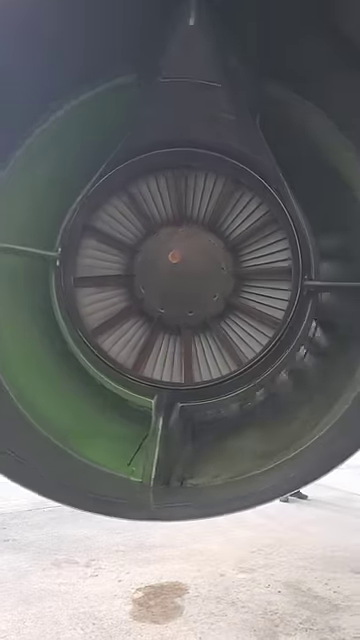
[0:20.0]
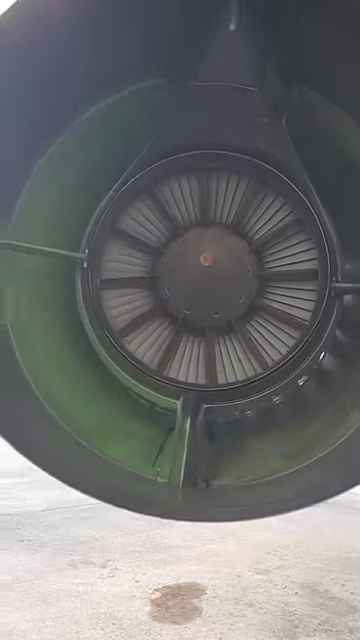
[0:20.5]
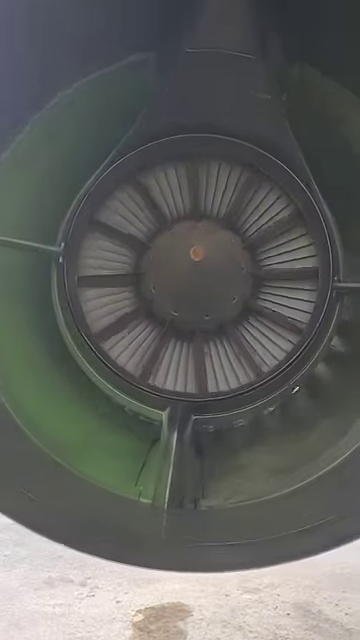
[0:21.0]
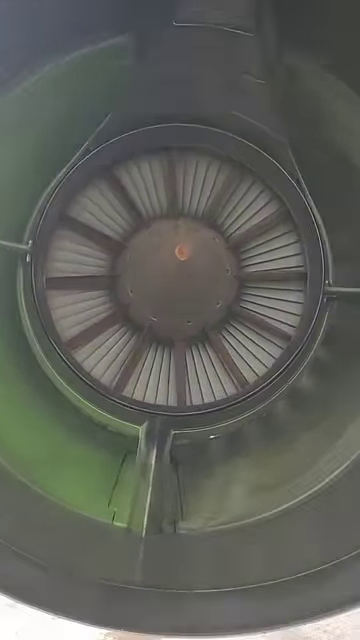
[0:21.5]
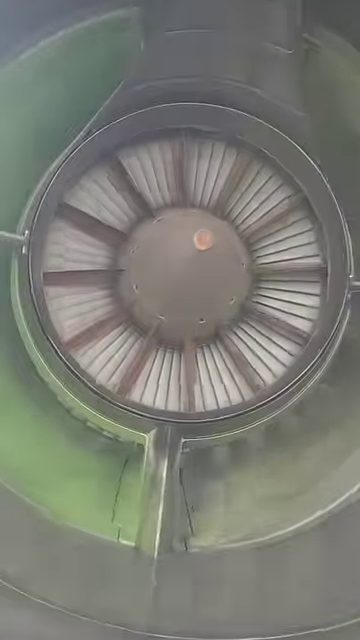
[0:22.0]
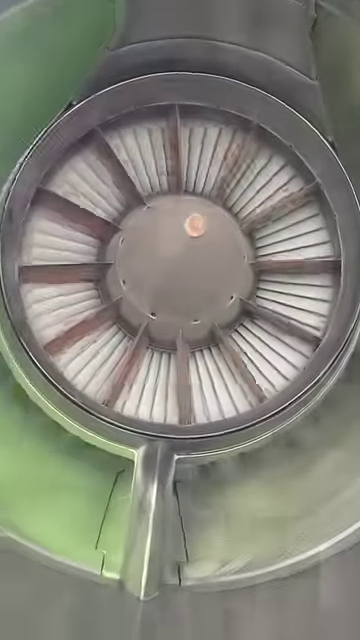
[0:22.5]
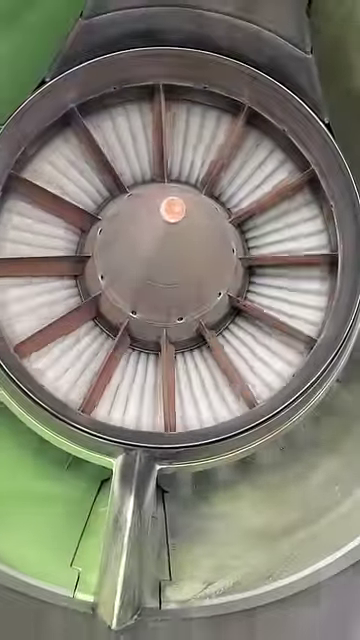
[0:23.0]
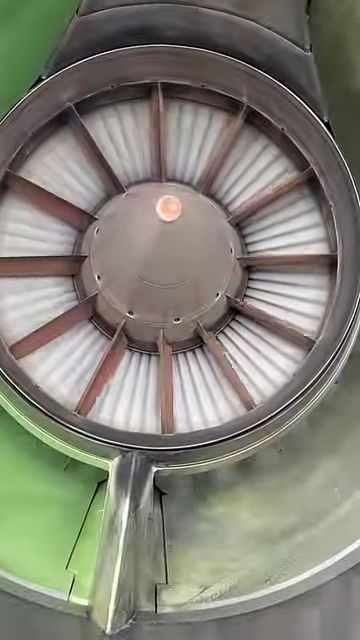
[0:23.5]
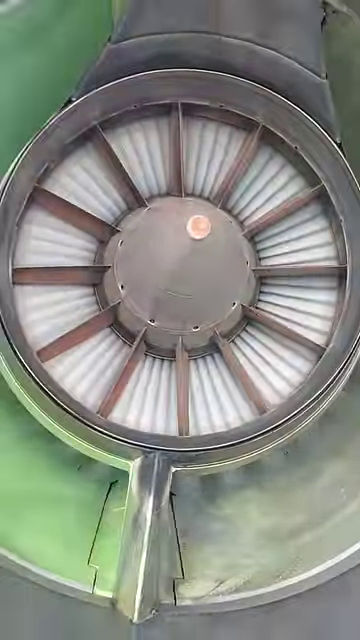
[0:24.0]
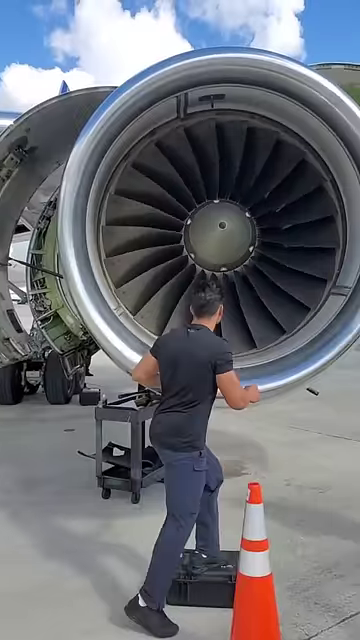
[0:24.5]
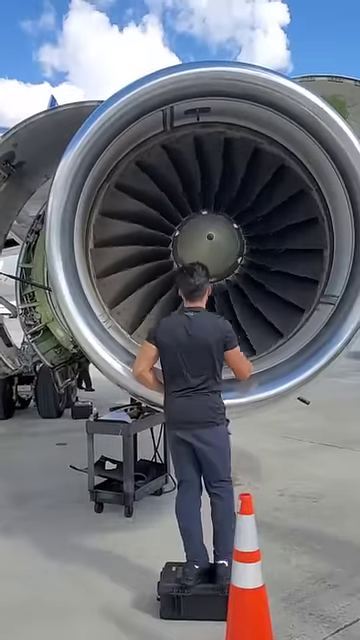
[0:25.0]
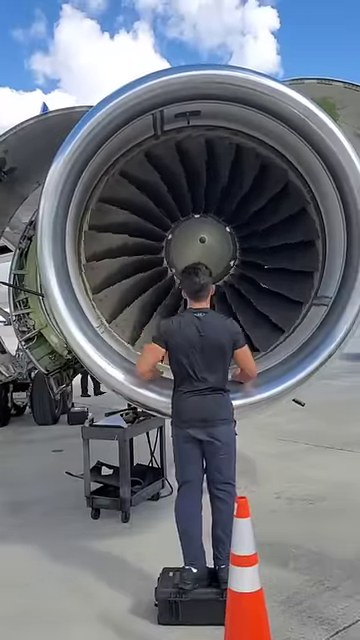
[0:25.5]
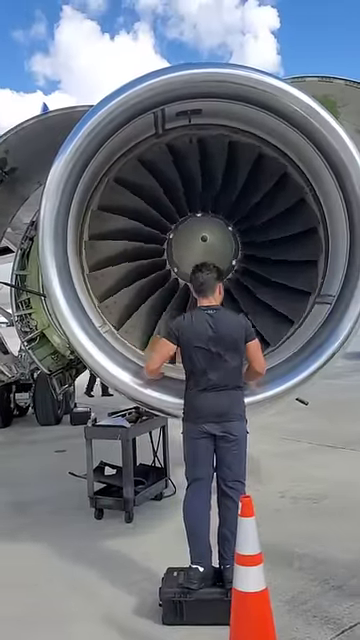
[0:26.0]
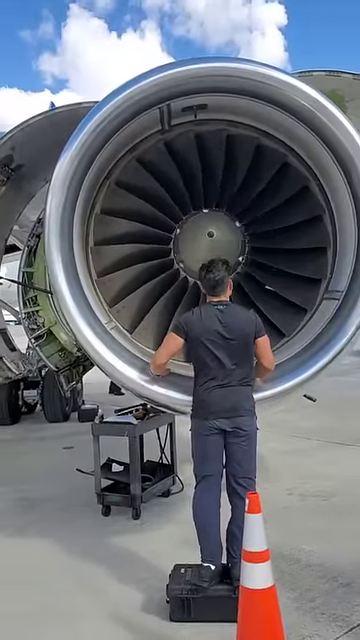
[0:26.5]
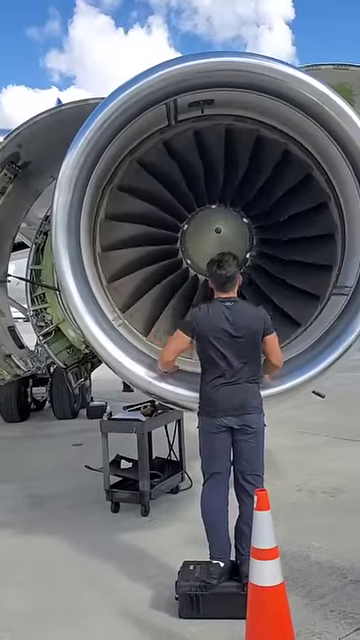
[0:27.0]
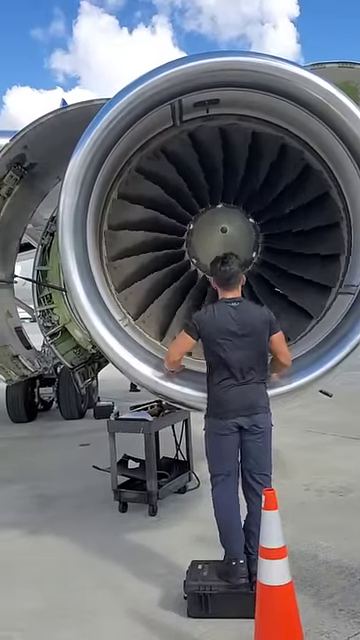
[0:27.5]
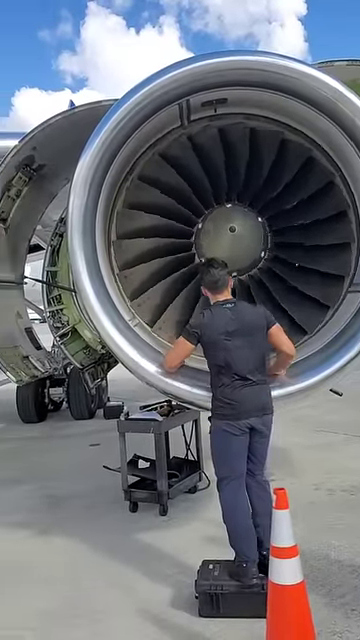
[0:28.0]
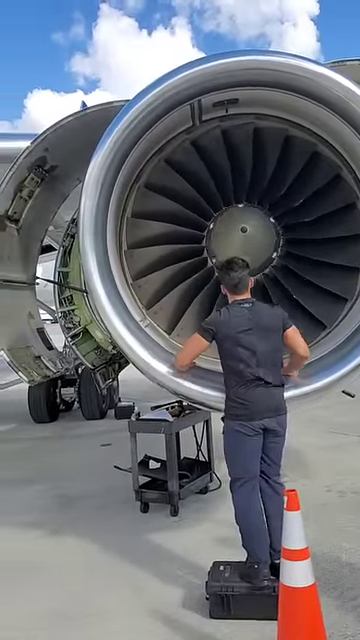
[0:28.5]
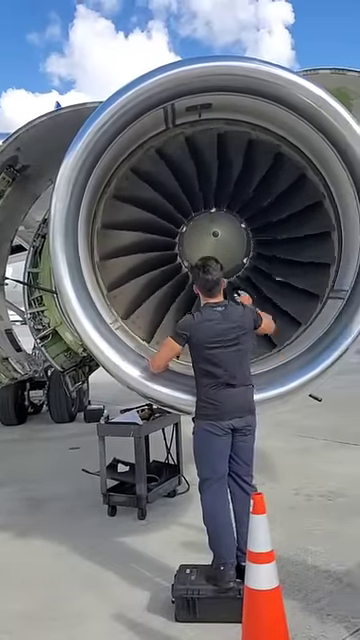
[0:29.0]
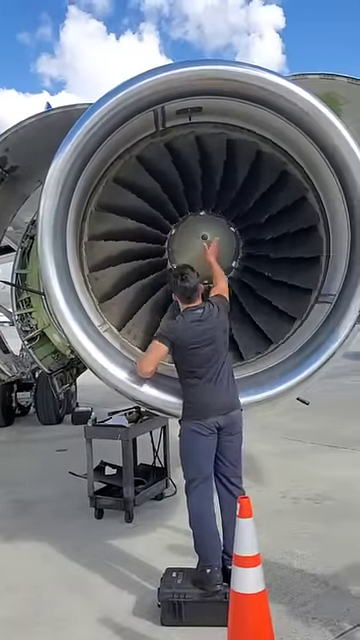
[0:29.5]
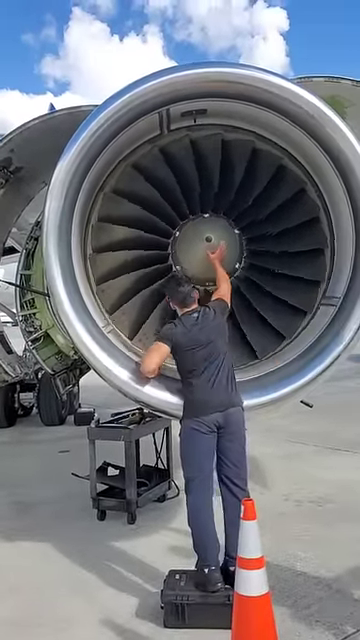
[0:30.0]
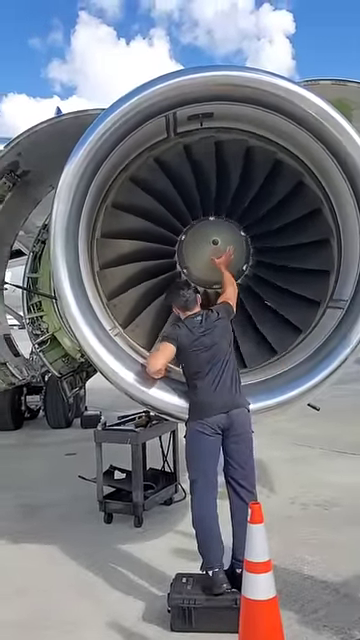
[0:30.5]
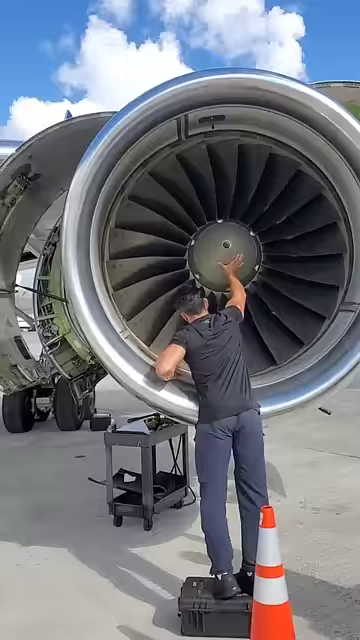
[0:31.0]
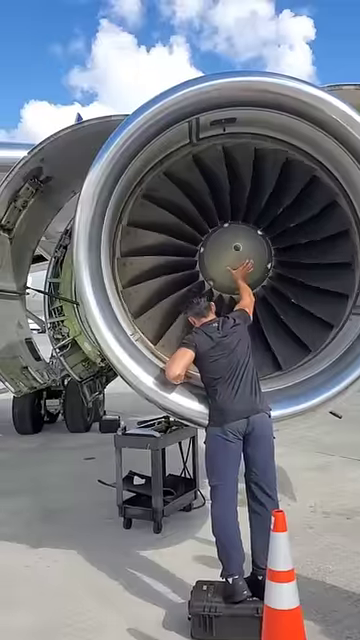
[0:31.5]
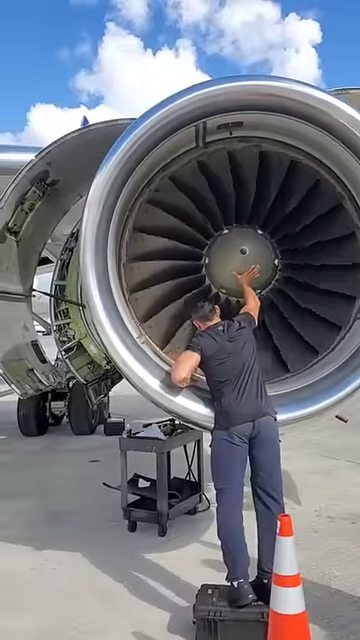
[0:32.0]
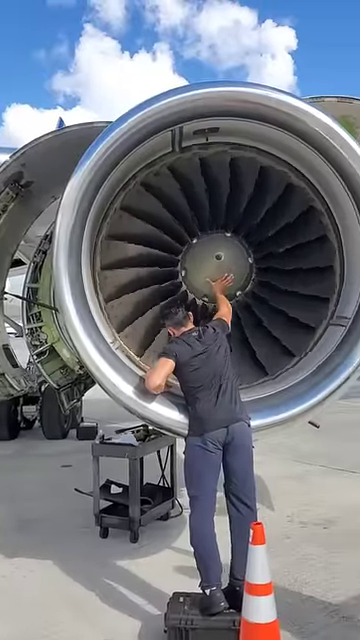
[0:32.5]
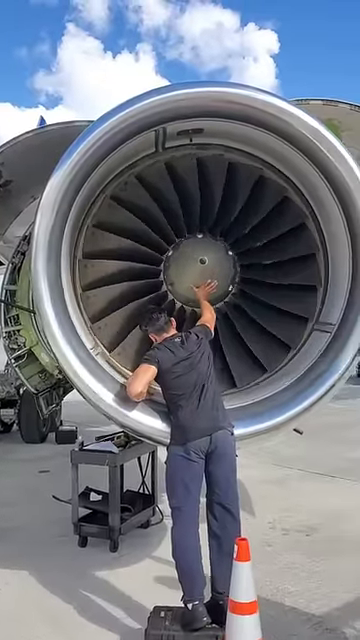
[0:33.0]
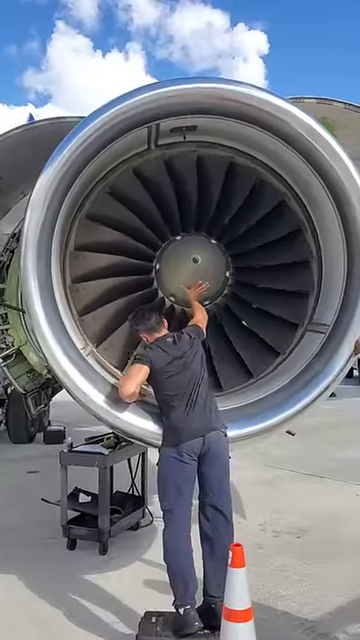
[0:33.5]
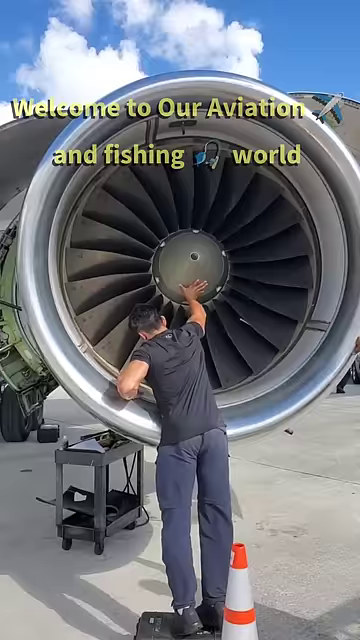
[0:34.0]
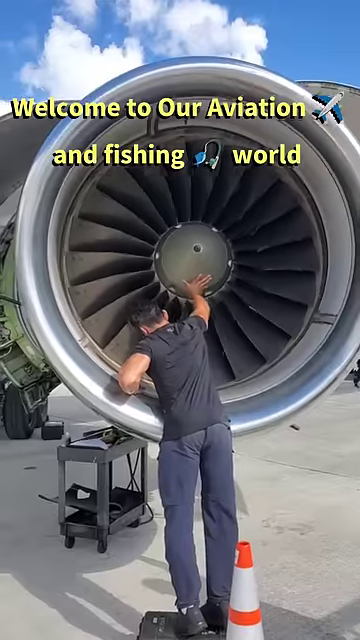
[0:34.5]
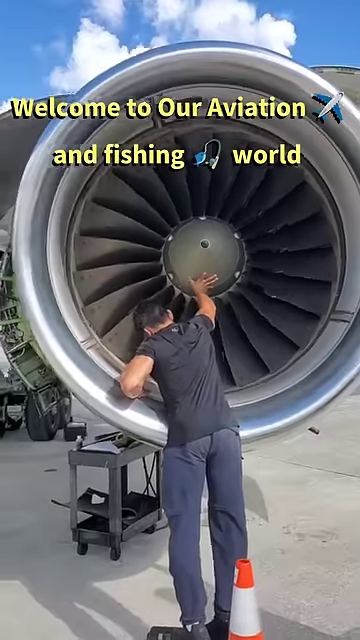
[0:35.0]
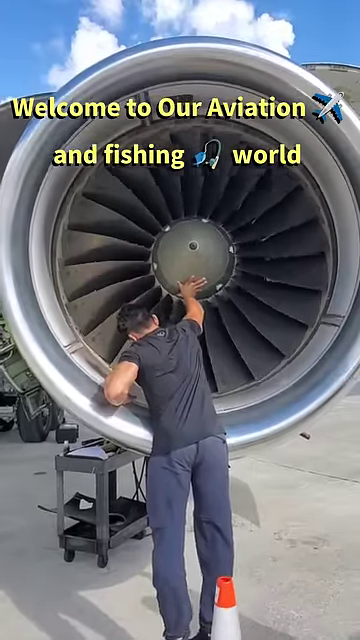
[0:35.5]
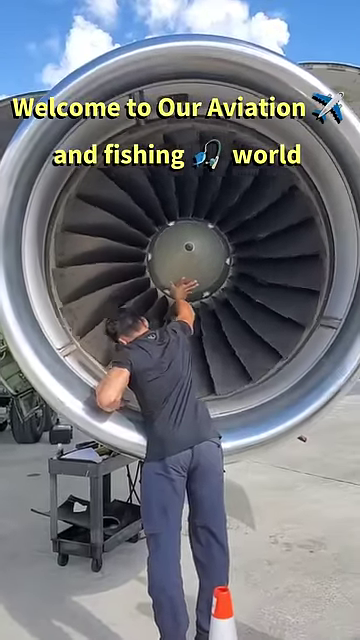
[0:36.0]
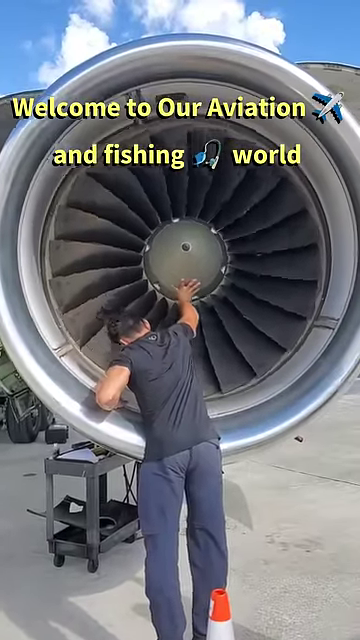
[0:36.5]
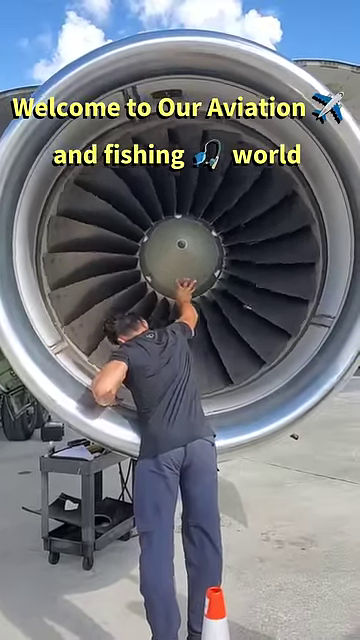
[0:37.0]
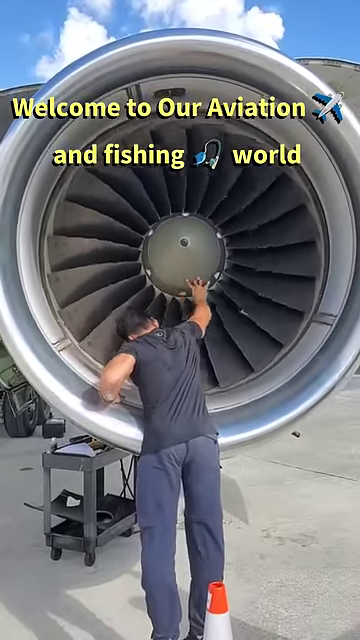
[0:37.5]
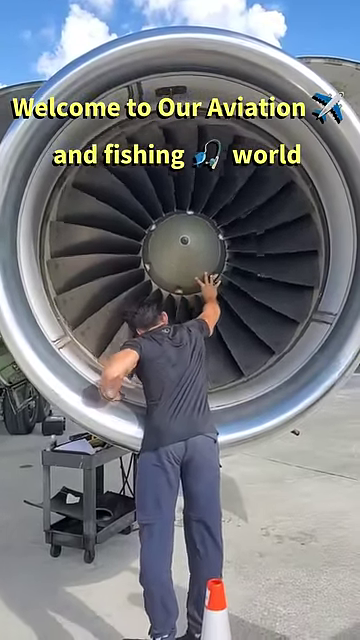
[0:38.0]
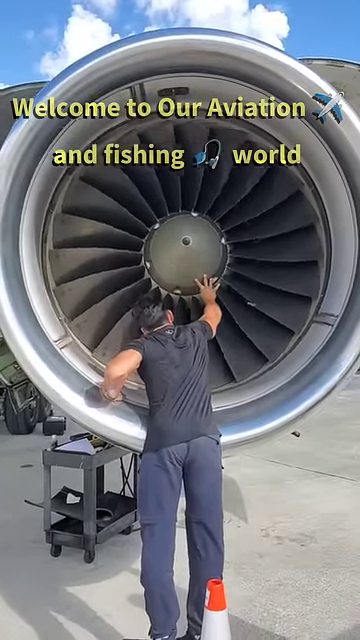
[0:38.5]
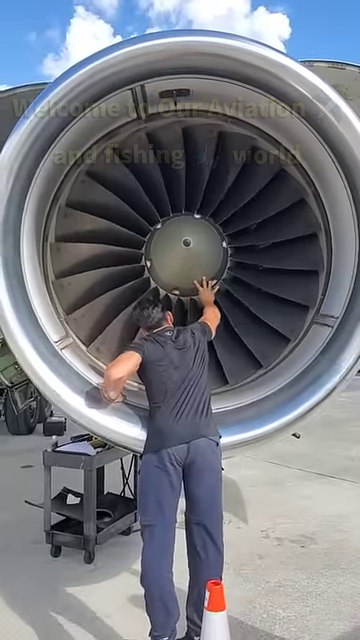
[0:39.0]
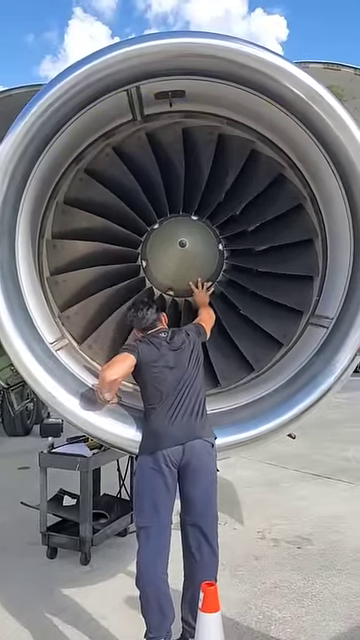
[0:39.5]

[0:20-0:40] The shot begins at the back of the engine, which is spinning and kind of greenish inside, then moves toward the front. A man sits on what looks like a toolbox; he wears blue pants and a black shirt. Lettering appears on top of it. The man puts down an orange cone with white stripes and then is kind of grabbing the engine, slowing it down. Yellow lettering reads "welcome to our aviation", and underneath it reads "and fishing world".